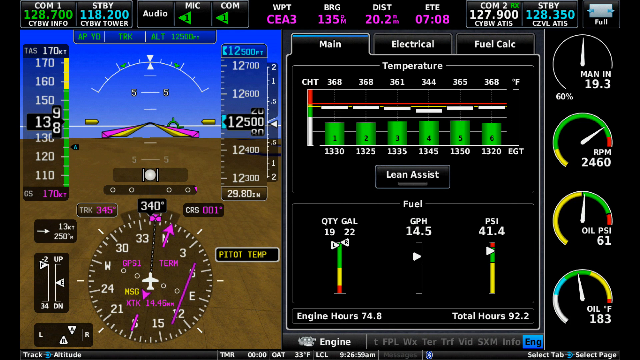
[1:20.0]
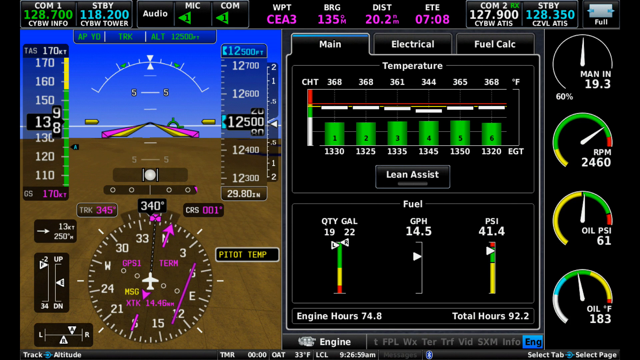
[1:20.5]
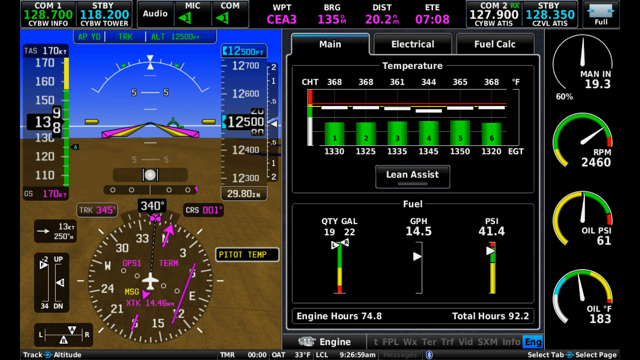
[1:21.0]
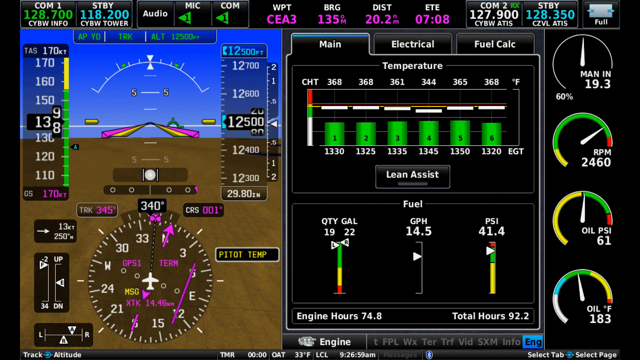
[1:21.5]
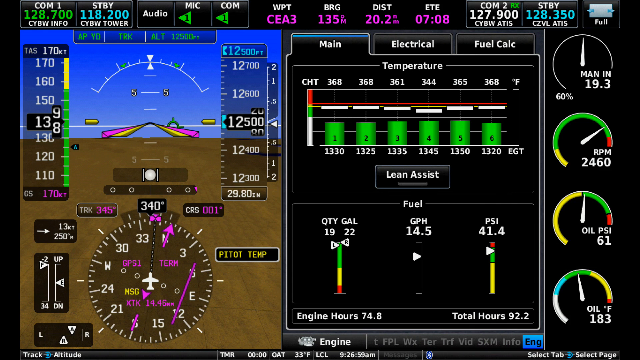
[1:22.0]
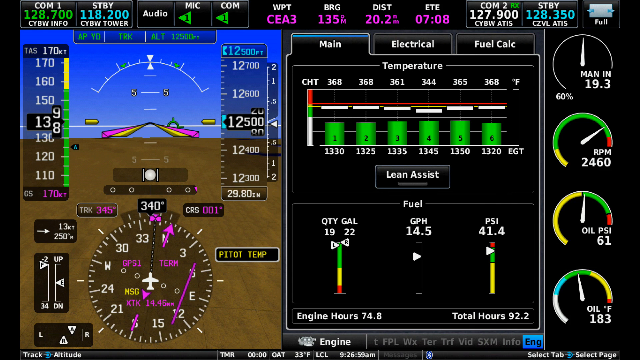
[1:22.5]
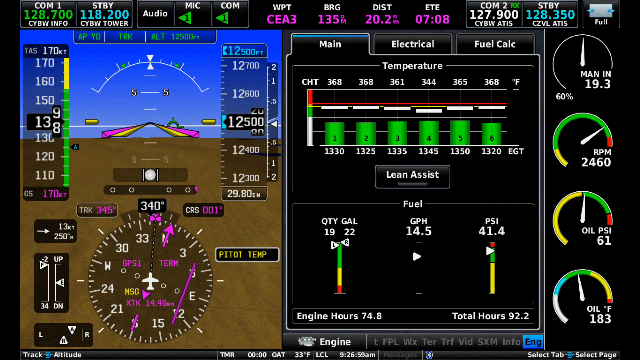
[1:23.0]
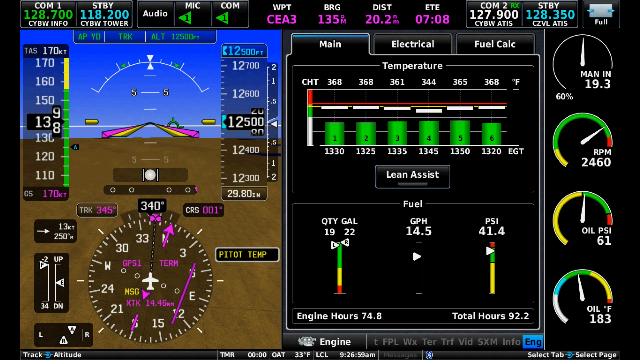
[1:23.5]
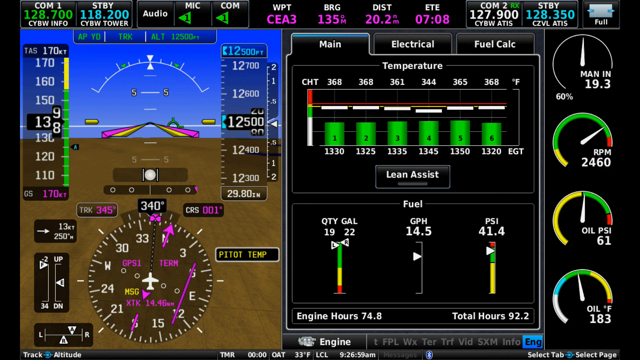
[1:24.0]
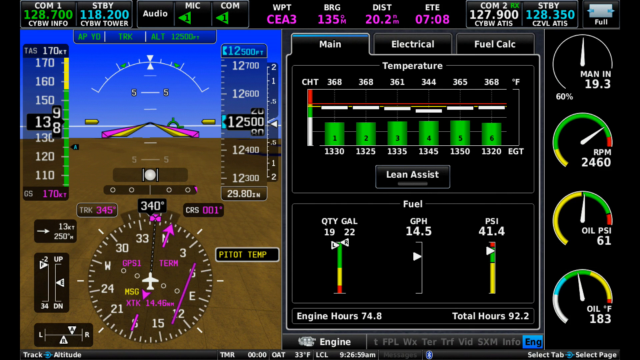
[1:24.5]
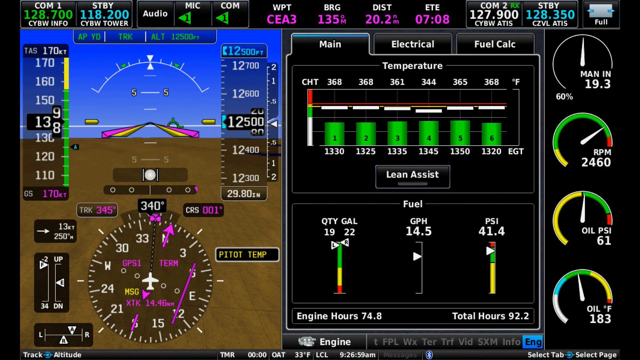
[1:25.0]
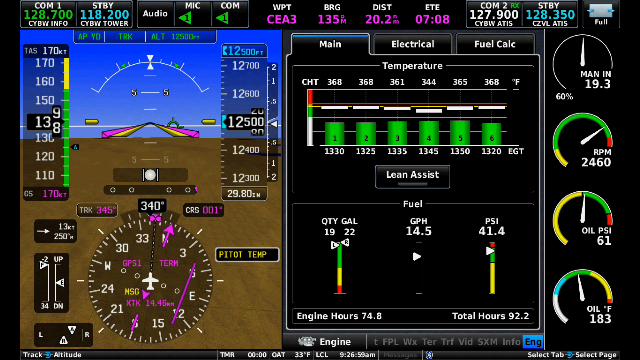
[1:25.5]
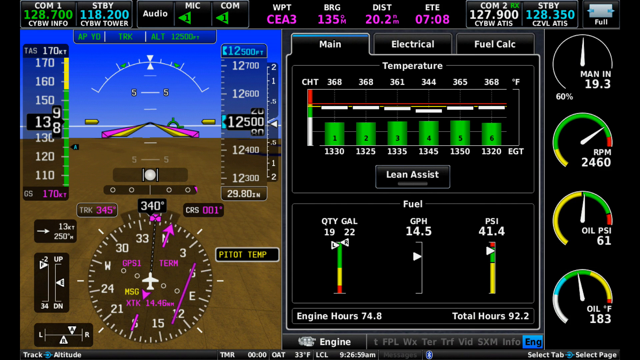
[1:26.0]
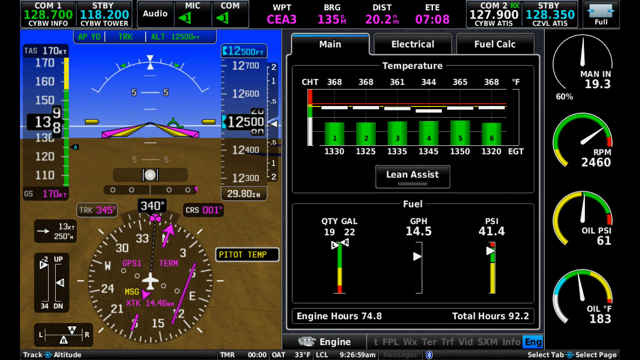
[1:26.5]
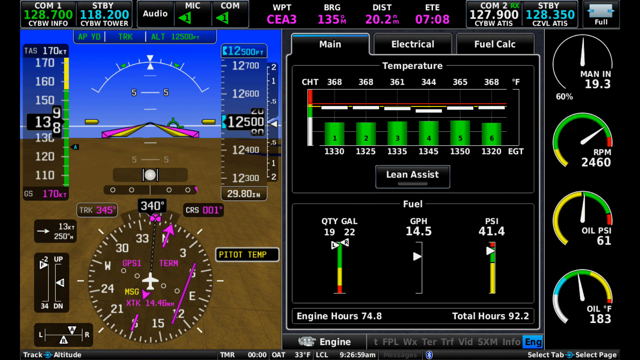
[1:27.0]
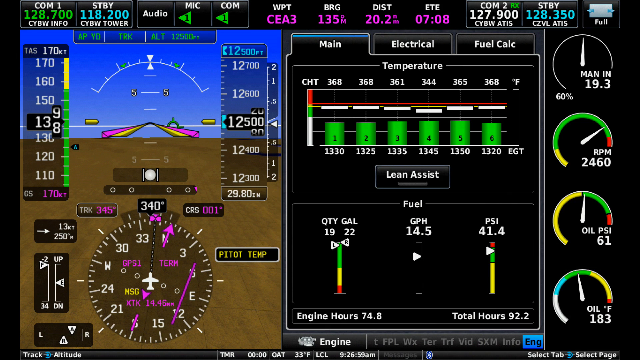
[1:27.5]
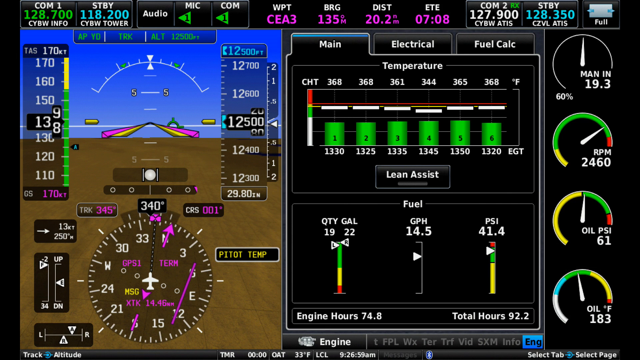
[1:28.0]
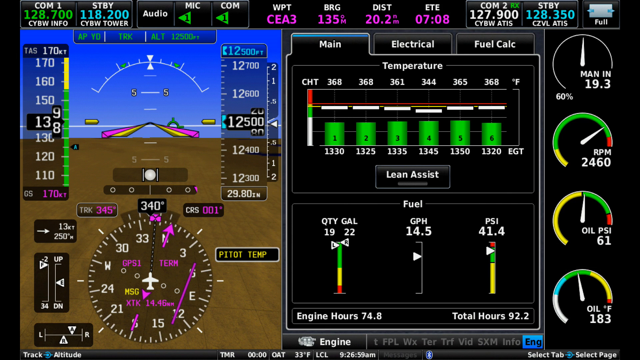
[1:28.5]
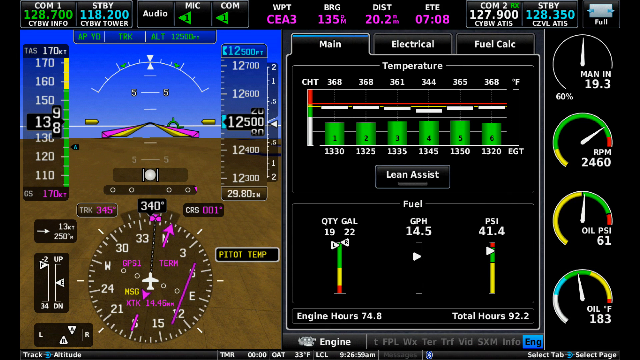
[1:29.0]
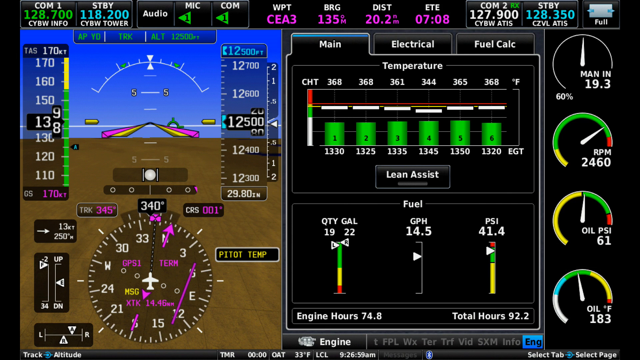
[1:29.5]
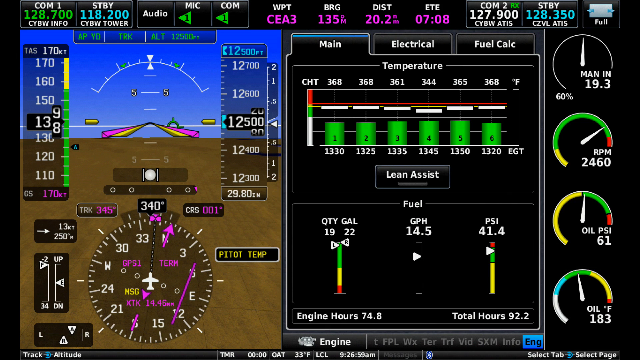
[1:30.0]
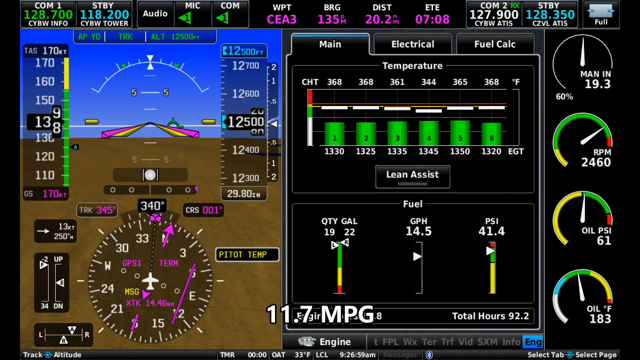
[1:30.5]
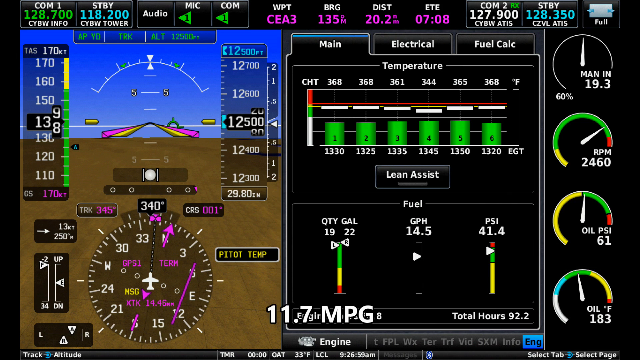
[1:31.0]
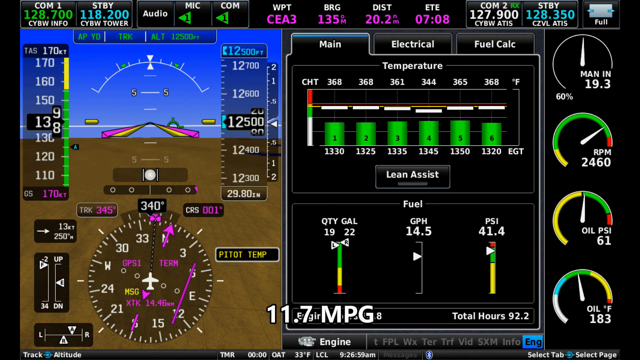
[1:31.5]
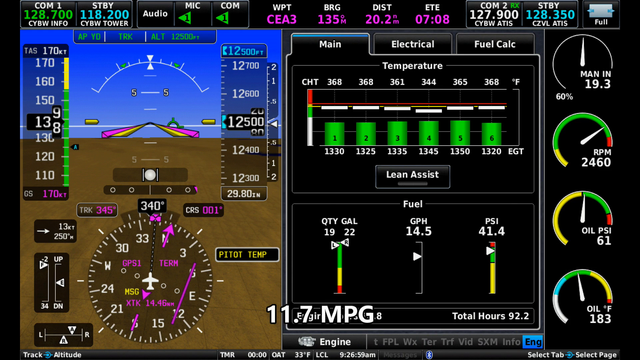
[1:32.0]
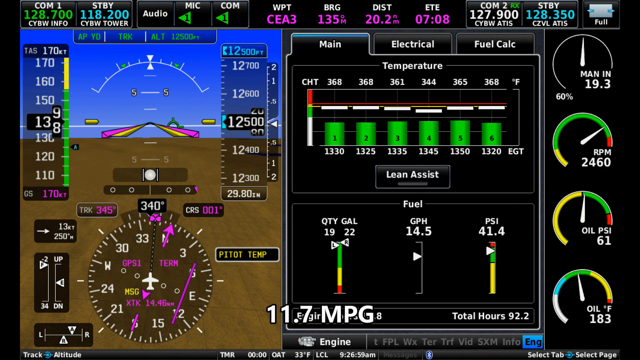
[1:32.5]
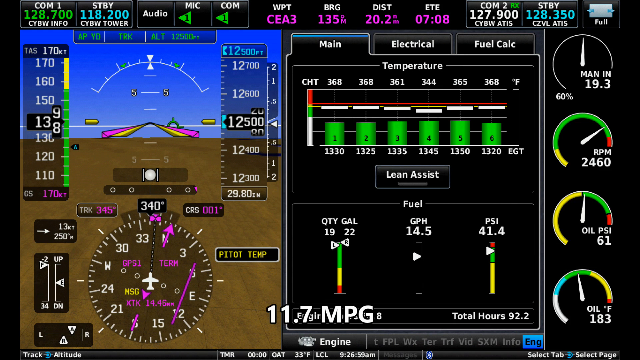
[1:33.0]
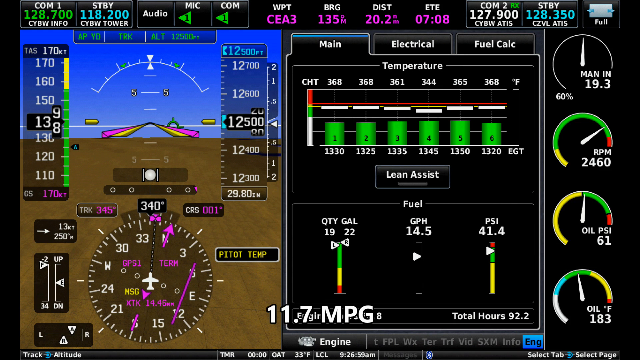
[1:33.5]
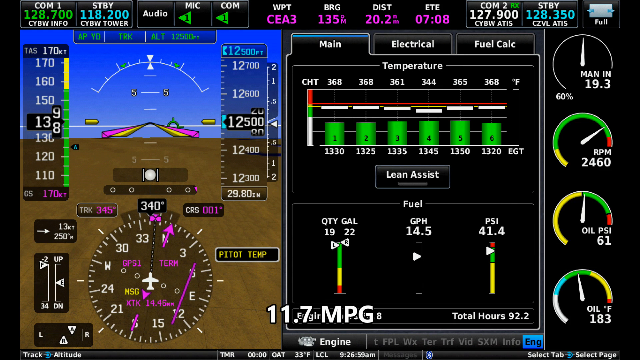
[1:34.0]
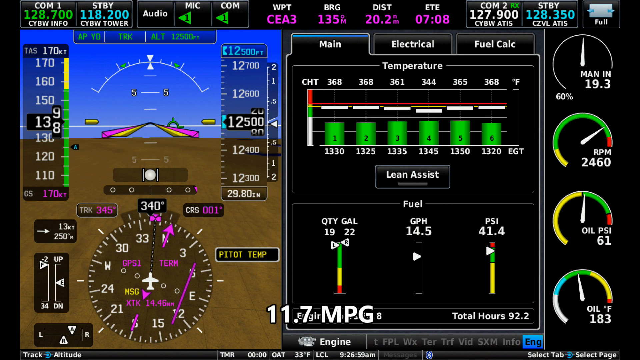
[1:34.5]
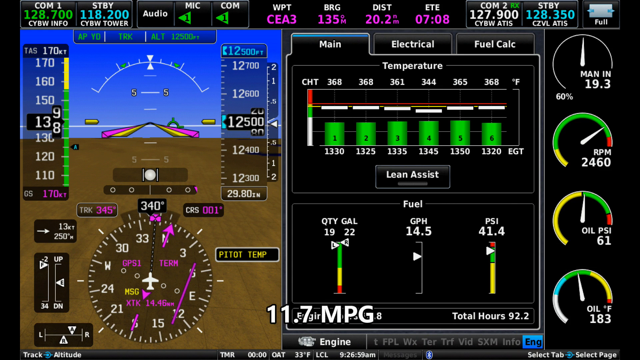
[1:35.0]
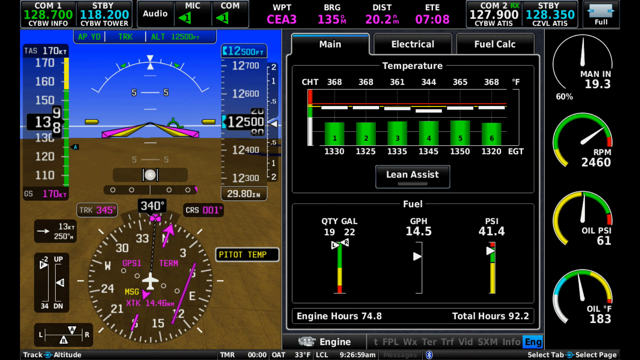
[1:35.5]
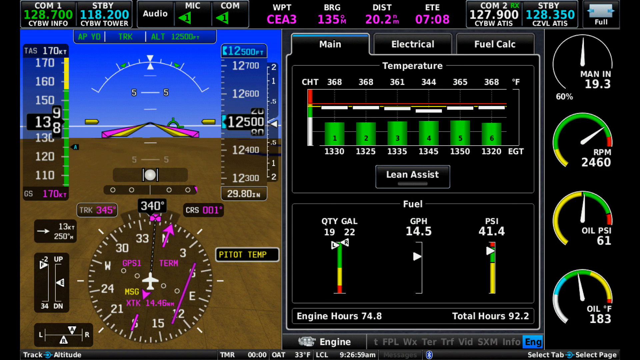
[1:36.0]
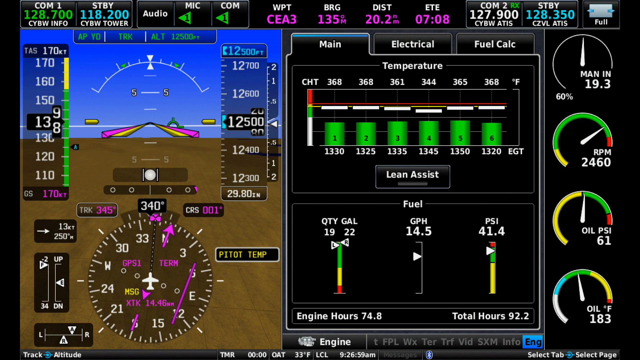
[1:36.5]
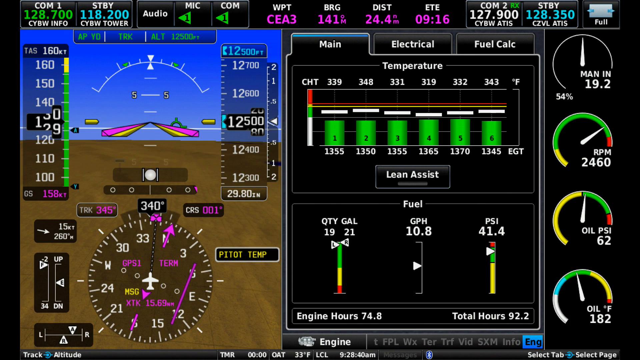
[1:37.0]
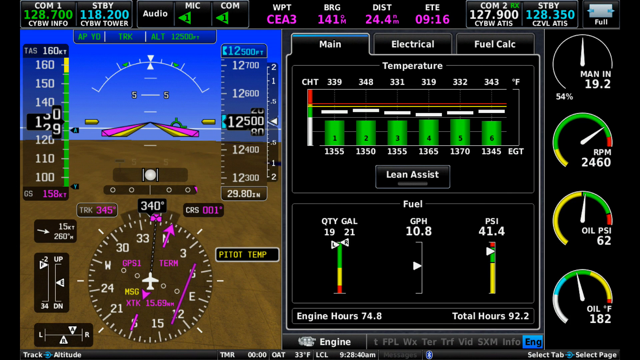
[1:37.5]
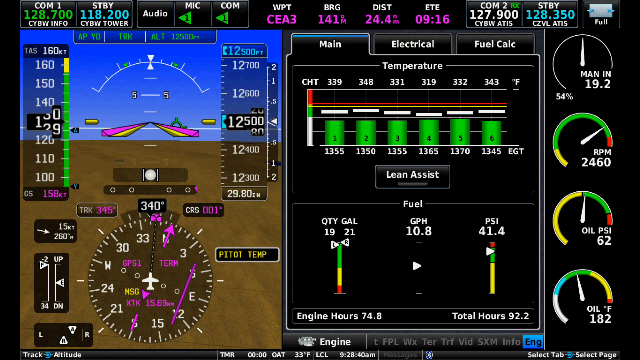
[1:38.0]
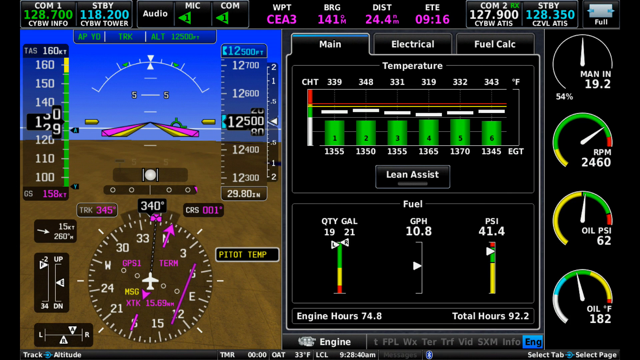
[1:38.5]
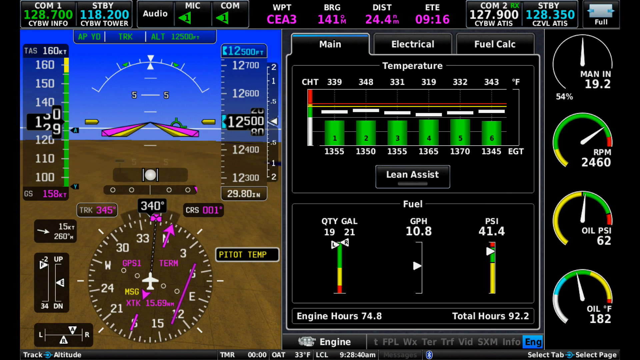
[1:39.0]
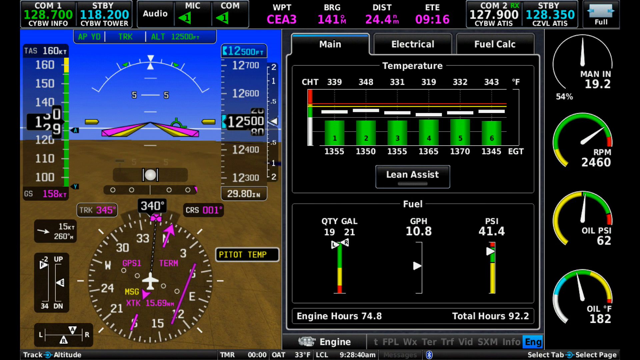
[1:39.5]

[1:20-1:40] A black box on the right side is labeled "main," "electrical," and "fuel calc" in white text. A temperature section reads "CHT 368, 368, 361, 344, 365, and 368 Fahrenheit." Six green cylinders are numbered 1 through 6 in black, with white text beneath reading "1330, 1325, 1335, 1345, 1350, 1320 EGT," and a "lean assist" button below. A fuel section reads "quantity gal 1922, gph 14.5, psi 41.4, engine hour 74.8, total hours 92.2." On the right, what look like speedometers read "man in 19.3, 60 percent, rpm 2460, oil psi 61, oil Fahrenheit 183." A screen on the left shows what looks like distance information along with pilot temp, speed and similar information. A banner at the top reads "COM 1 128.700 CYBW info STBY 118.200 CYBW tower audio mic 1 COM 1 WPT CEA3 BRG 135M distance 20.2M ETE 0708 COM 2 RX 127.900 CYBW ATIS STBY 128.350 CZVL ATIS," with a little box that says "full." White text pops up reading "11.7 mpg," and then it kind of transitions a little to the left, continuing to transition on the left.